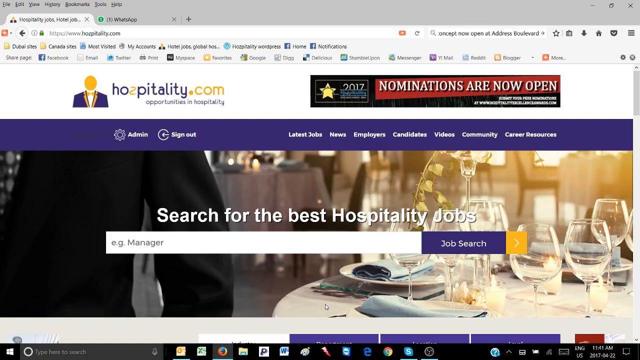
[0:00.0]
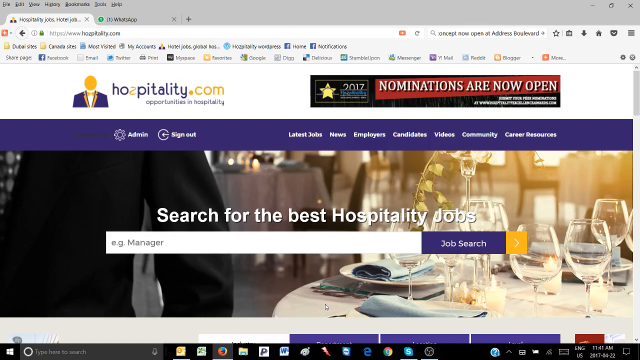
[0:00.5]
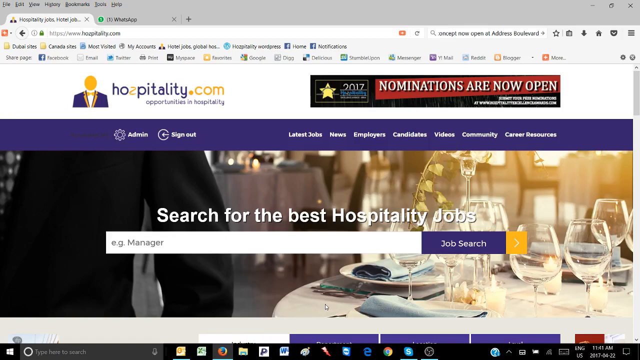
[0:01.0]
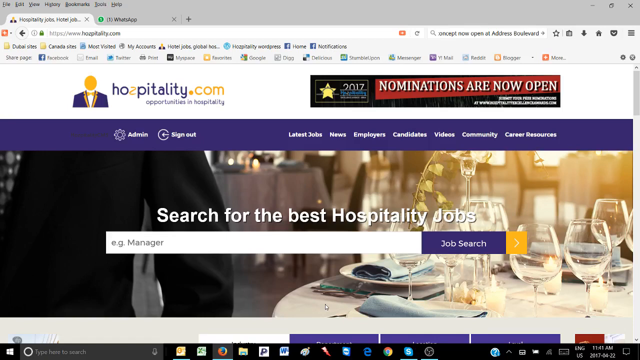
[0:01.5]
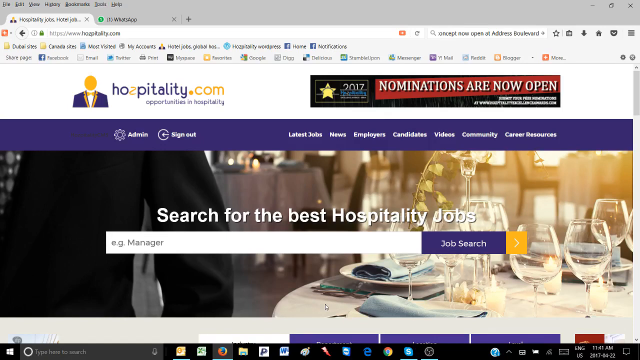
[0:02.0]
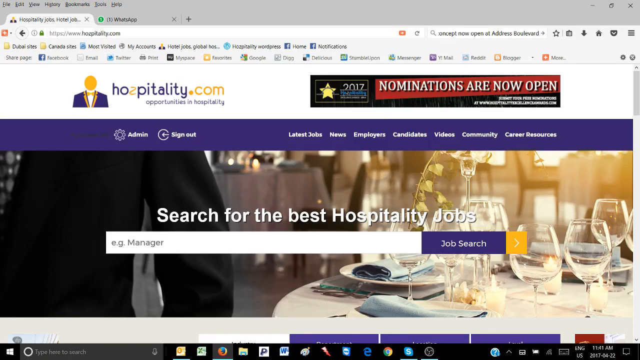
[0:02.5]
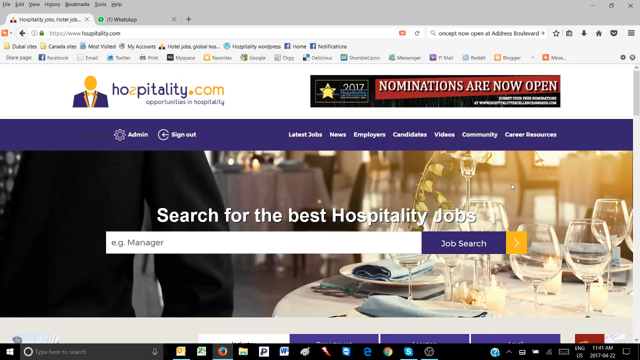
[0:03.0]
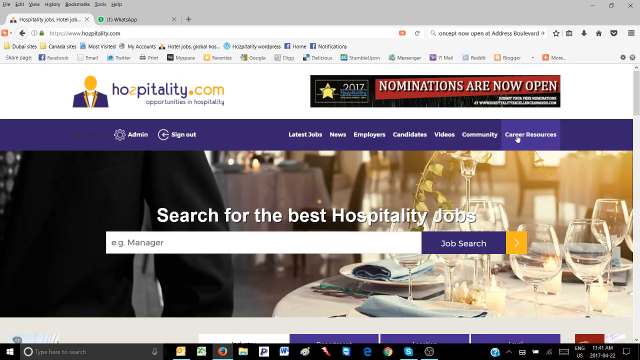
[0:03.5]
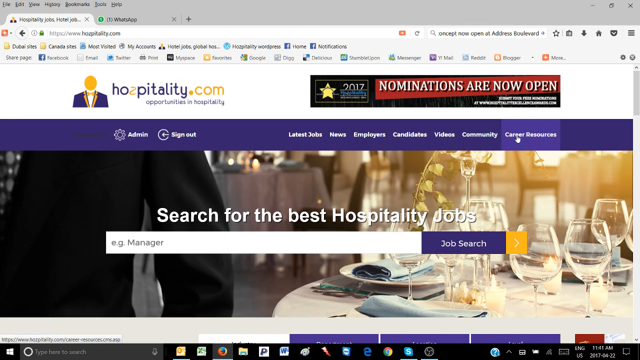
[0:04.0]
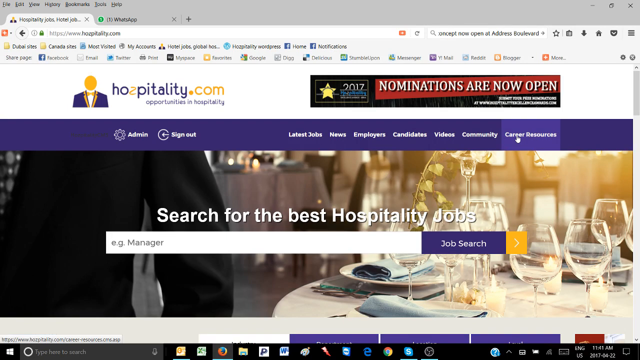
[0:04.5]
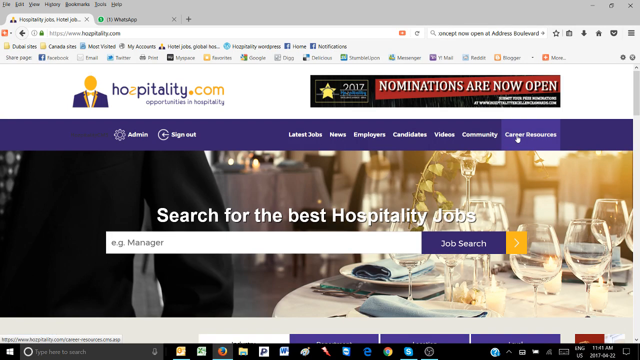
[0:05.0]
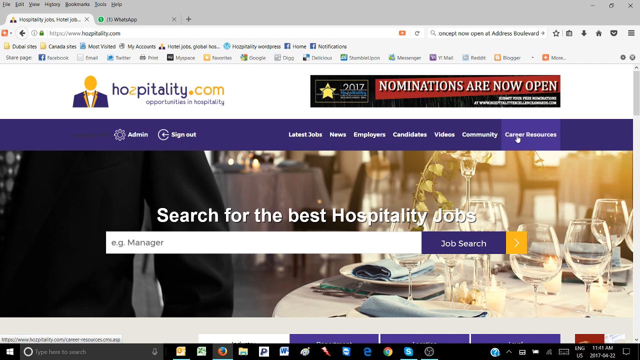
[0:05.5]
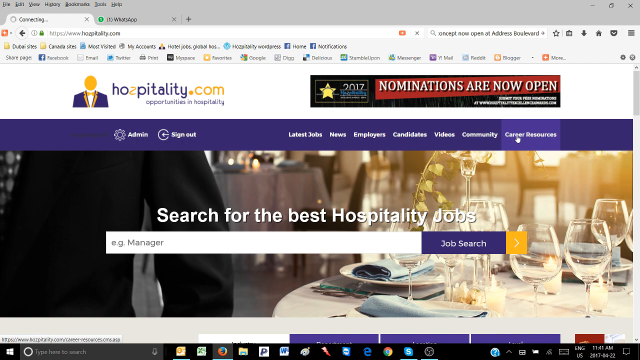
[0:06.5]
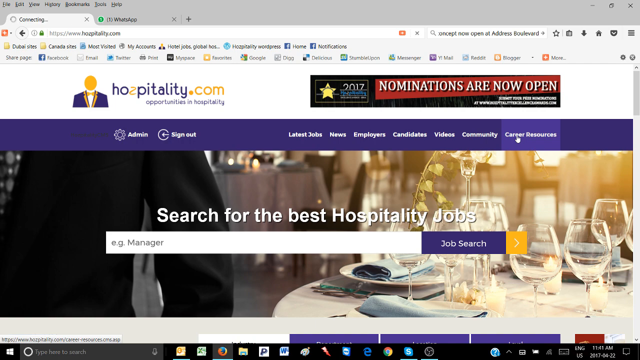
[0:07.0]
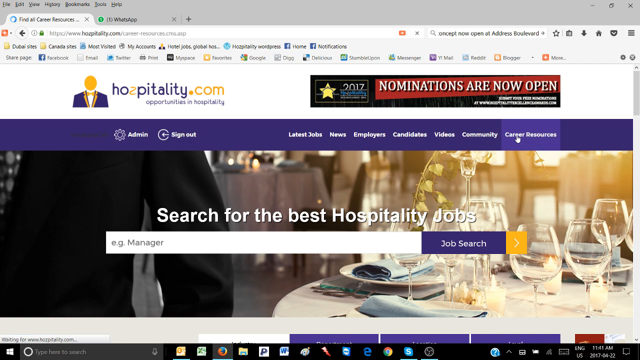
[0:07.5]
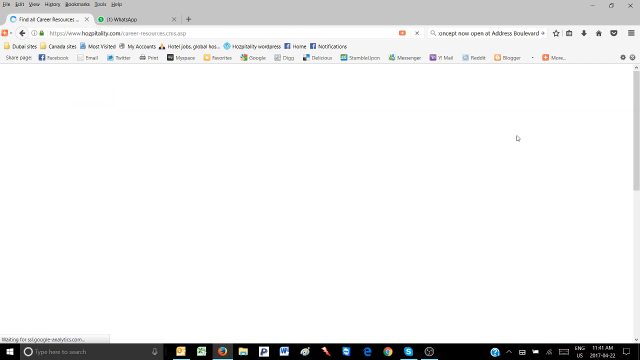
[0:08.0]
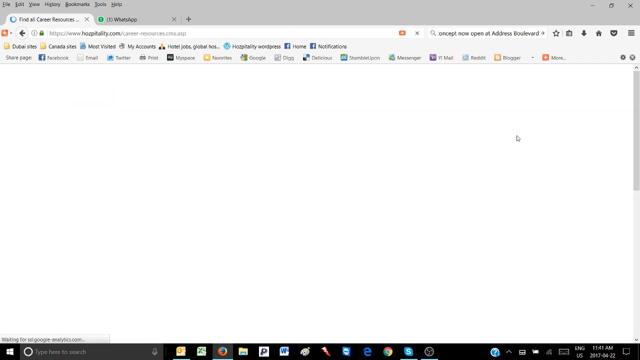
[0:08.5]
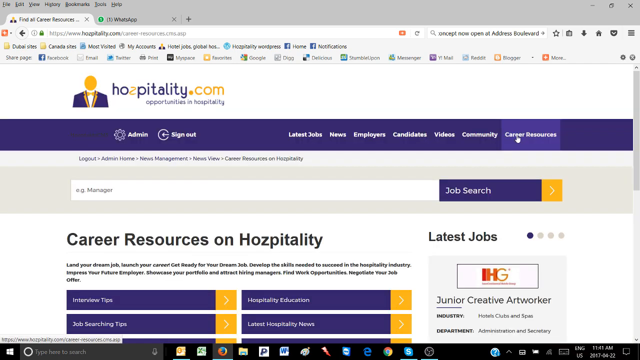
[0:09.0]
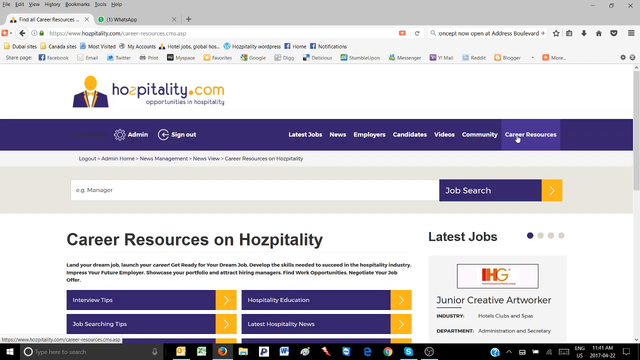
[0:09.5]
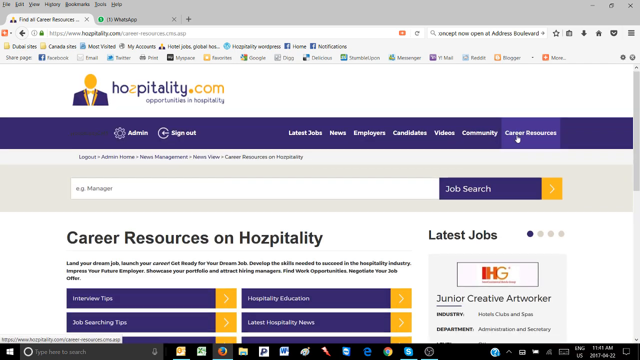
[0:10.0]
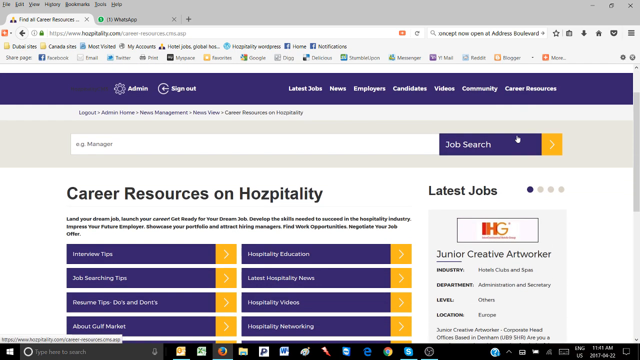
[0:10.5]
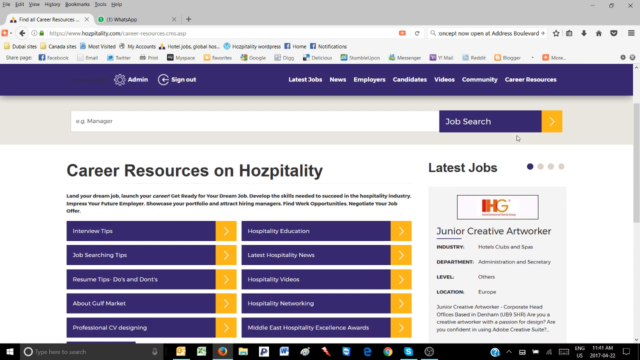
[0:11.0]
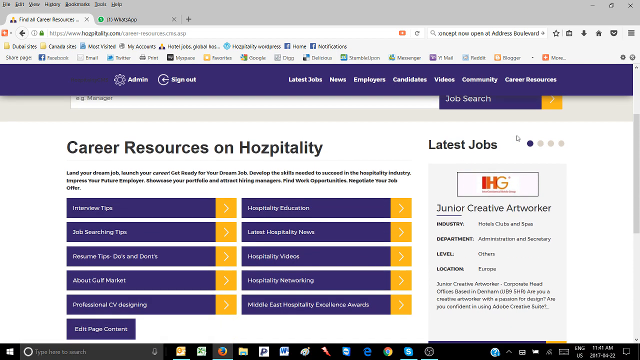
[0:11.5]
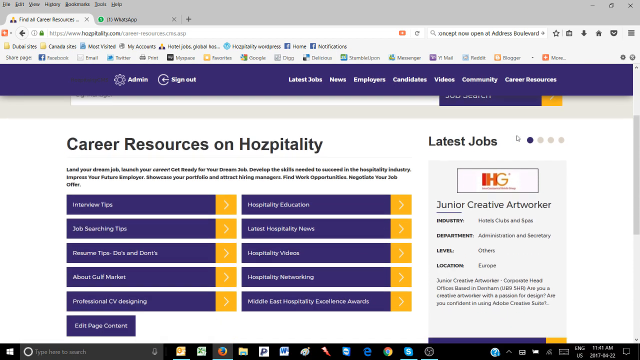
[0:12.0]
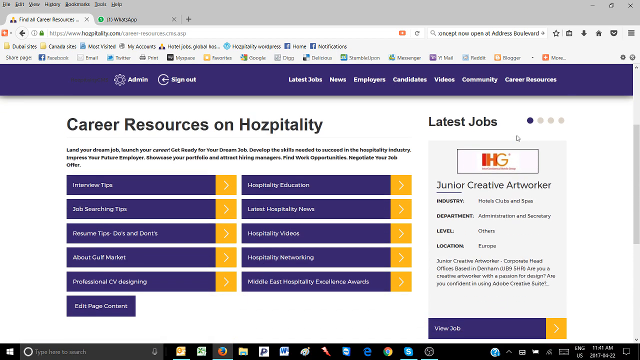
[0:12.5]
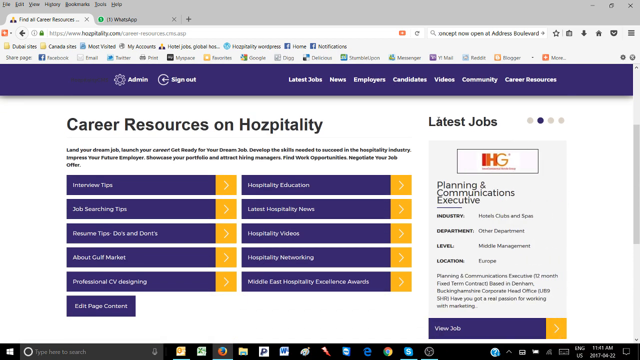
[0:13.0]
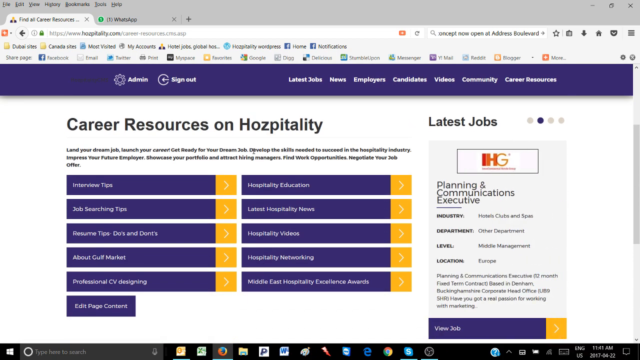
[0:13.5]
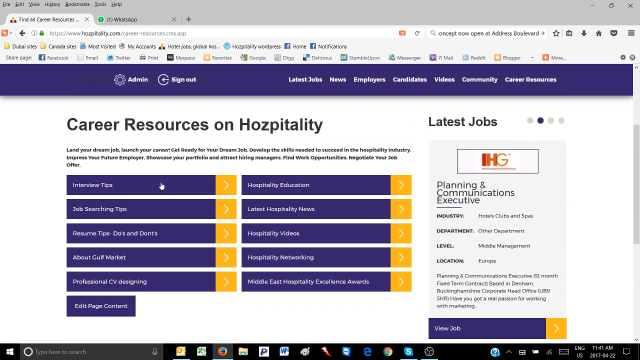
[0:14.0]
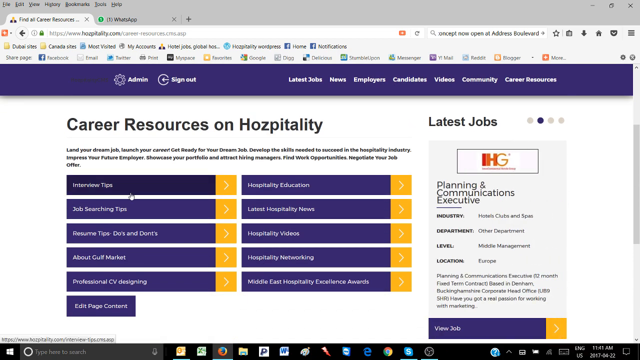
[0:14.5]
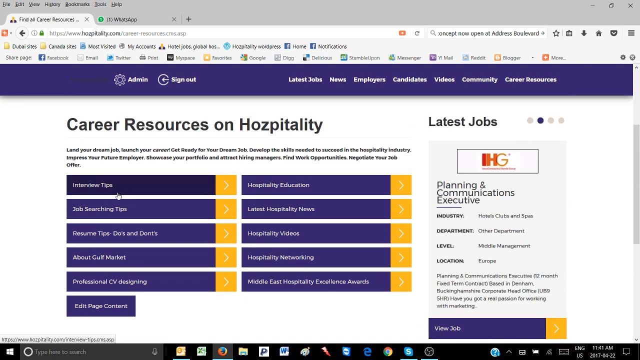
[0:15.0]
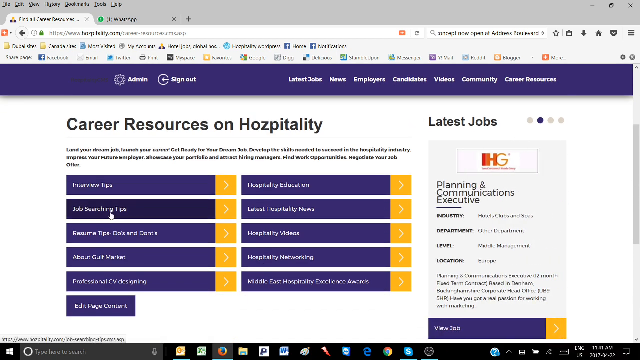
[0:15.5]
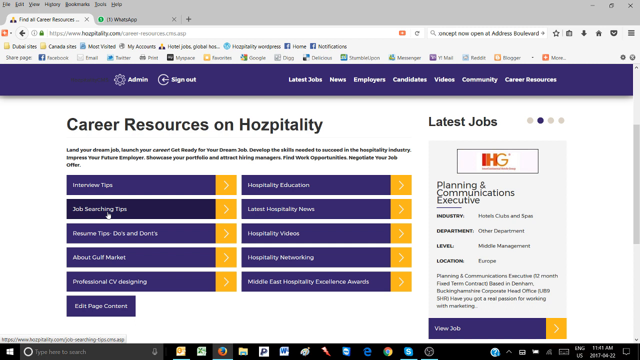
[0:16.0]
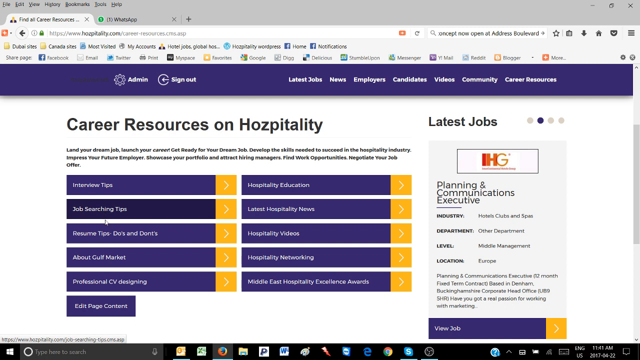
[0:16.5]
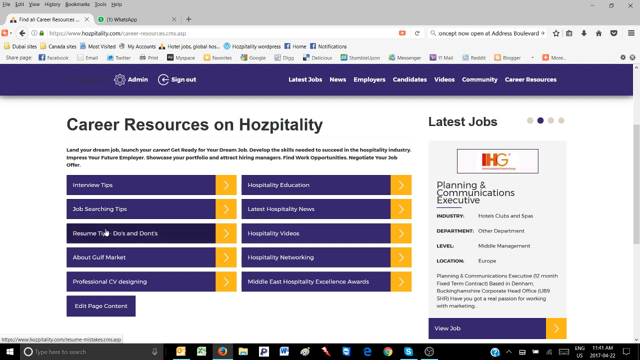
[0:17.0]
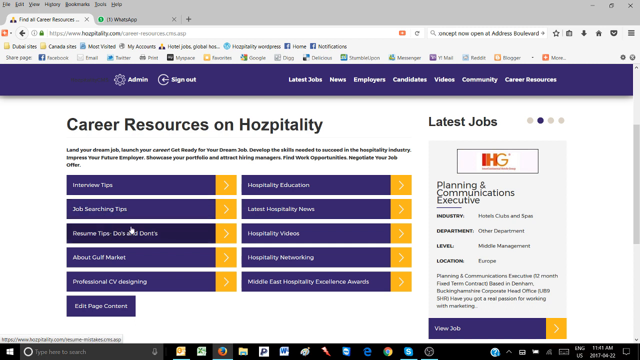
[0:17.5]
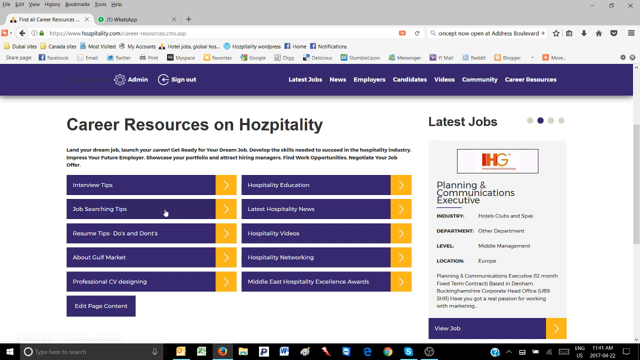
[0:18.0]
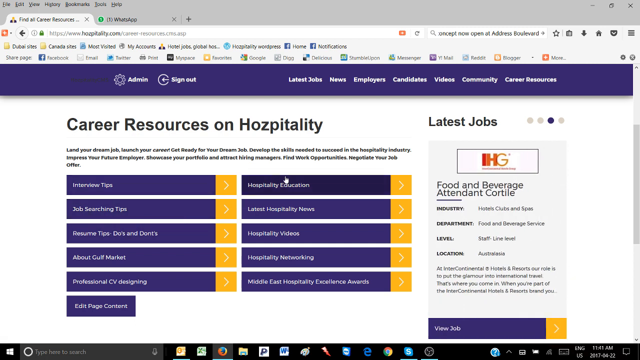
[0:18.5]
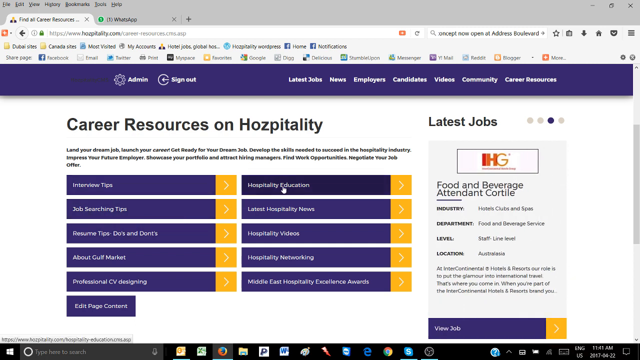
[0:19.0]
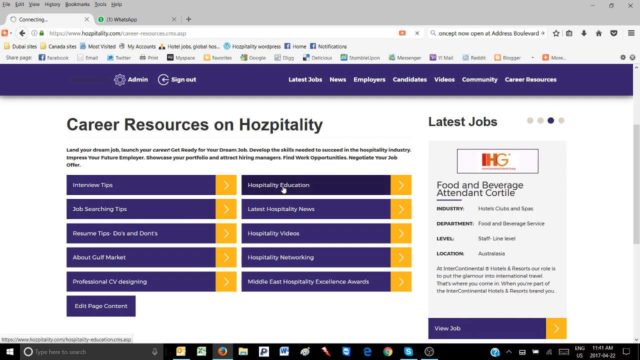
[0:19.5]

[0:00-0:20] The video concerns hospitality.com, showing a search for the best hospitality jobs. A screen depicting a computer screen appears, followed by a scrolling page about career resources on hospitality, which scrolls from the top toward the bottom. The cursor hovers over numerous lines: there are two columns of five lines each, linked tabs that lead to other sections or pages. The latest jobs are on the right side, and the page mentions total communications and execution. While scrolling, the cursor clicks on the right column of the top line. Meanwhile, a space on the right side shows different junior creative artwork and scrolls through different jobs from right to left, with four dots at its top for navigating between items. As that scrolls, the cursor on the left clicks on one of the columns.